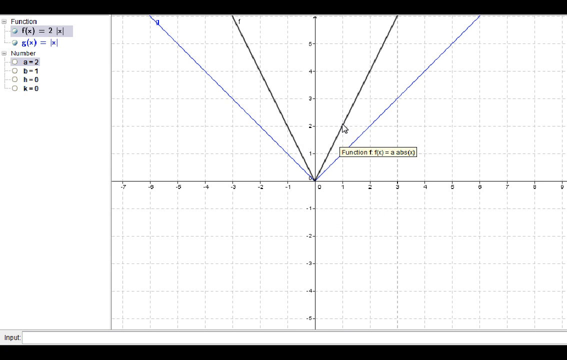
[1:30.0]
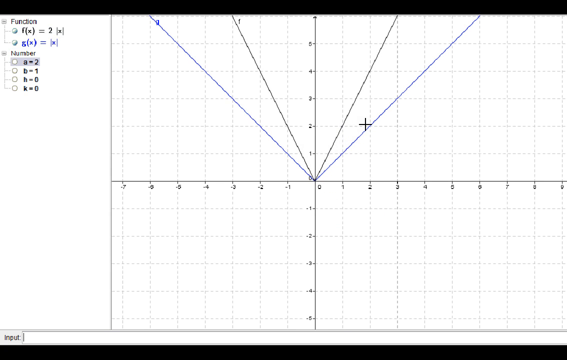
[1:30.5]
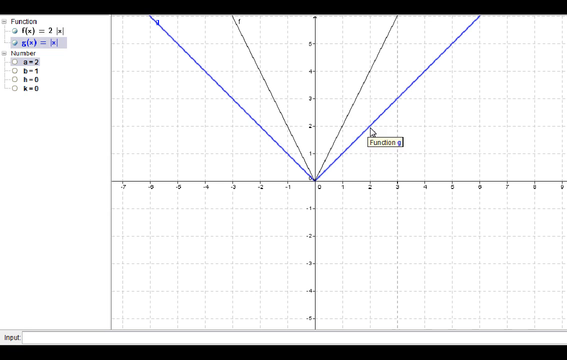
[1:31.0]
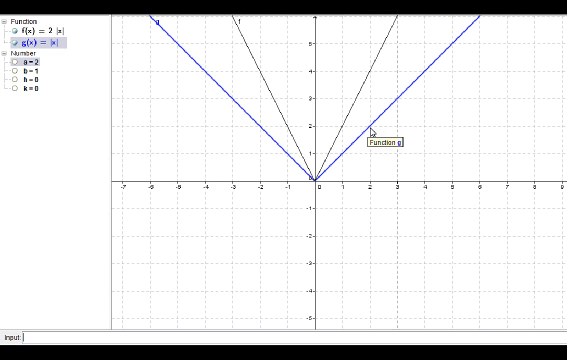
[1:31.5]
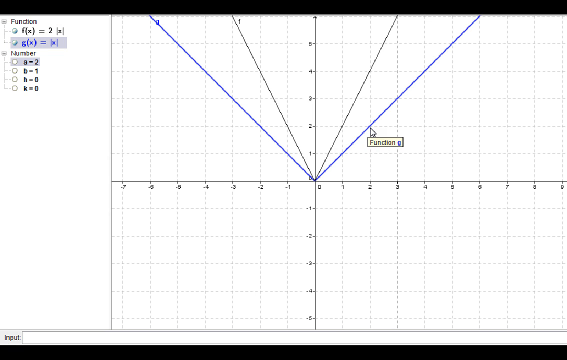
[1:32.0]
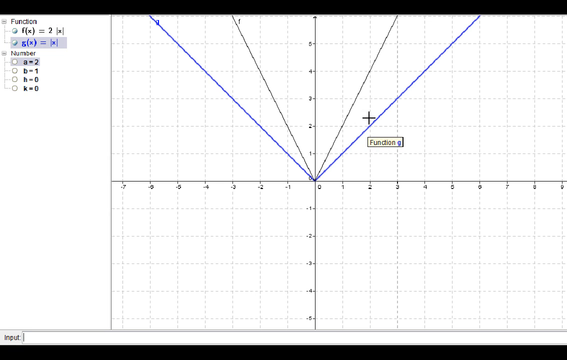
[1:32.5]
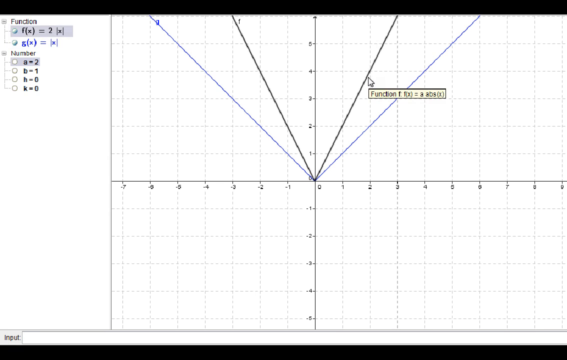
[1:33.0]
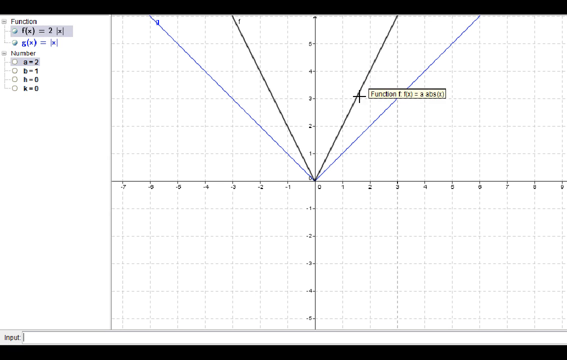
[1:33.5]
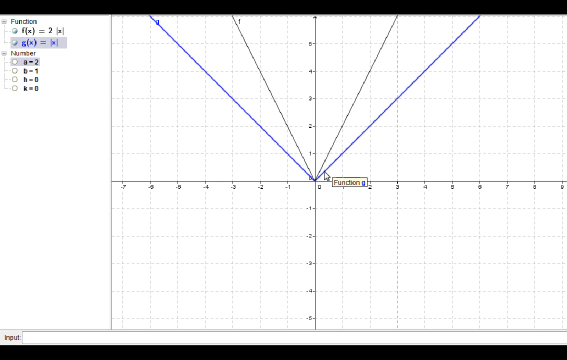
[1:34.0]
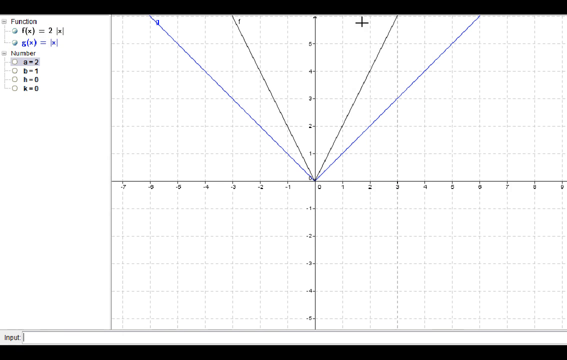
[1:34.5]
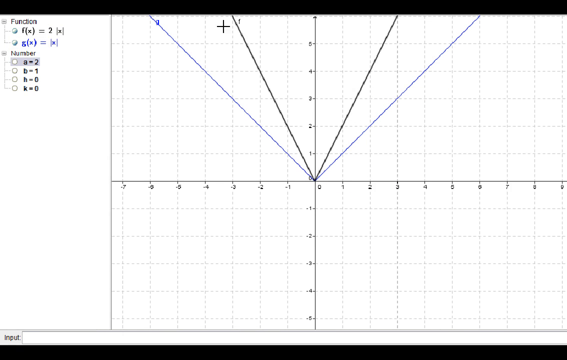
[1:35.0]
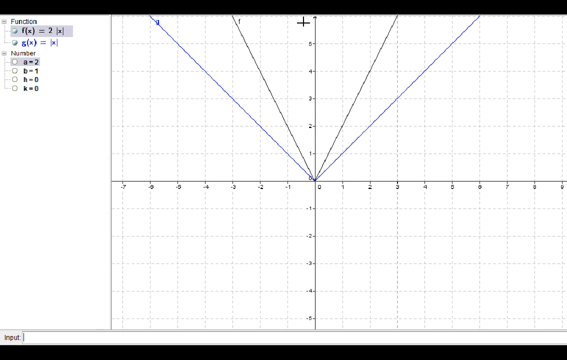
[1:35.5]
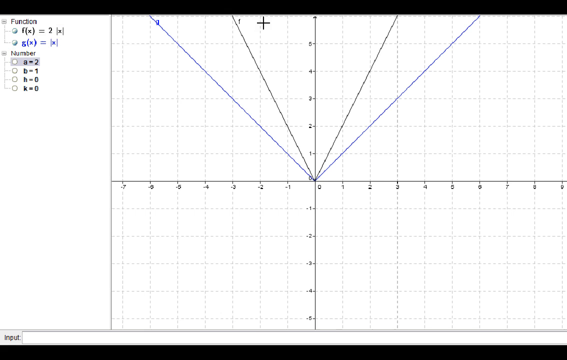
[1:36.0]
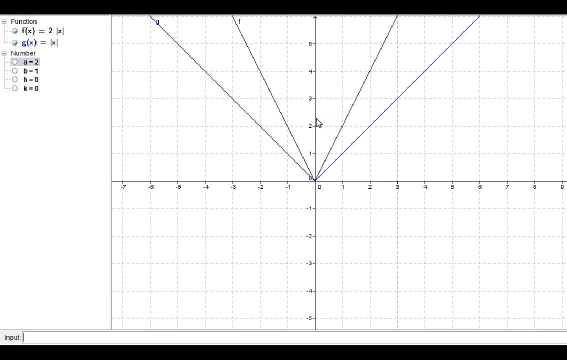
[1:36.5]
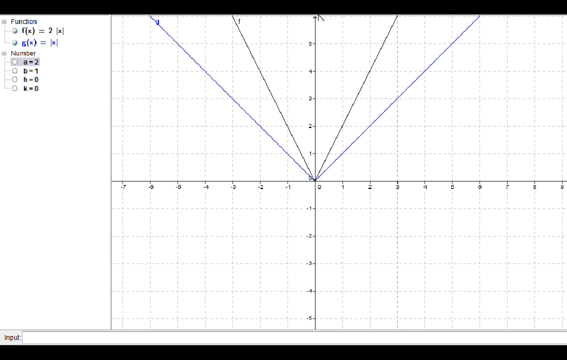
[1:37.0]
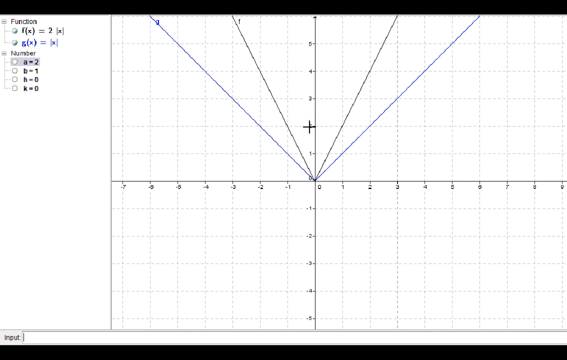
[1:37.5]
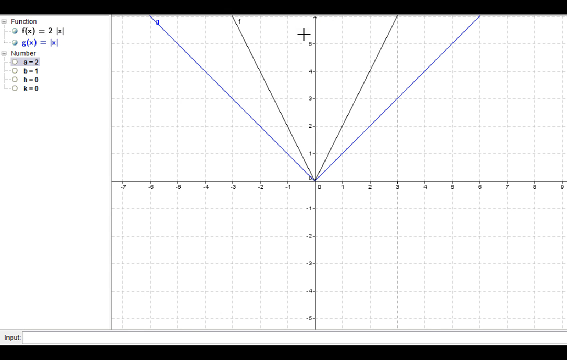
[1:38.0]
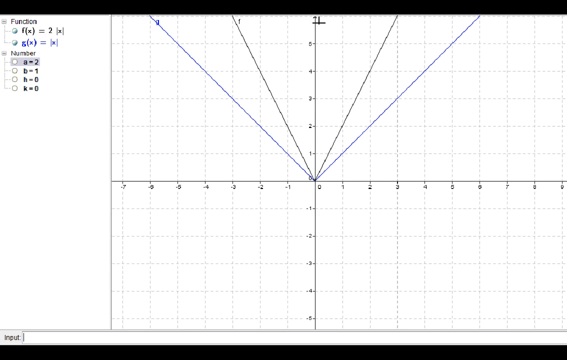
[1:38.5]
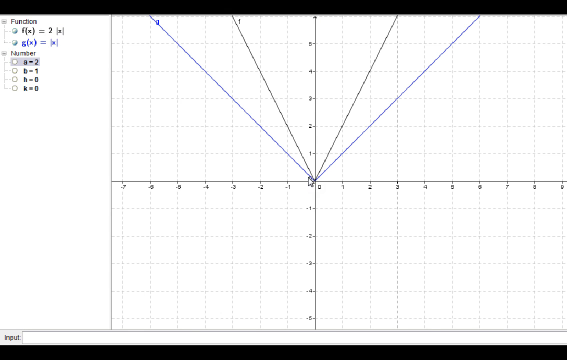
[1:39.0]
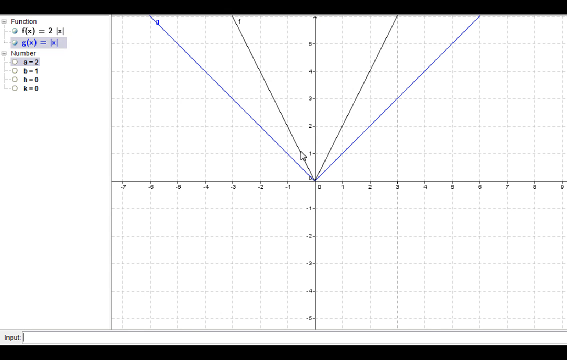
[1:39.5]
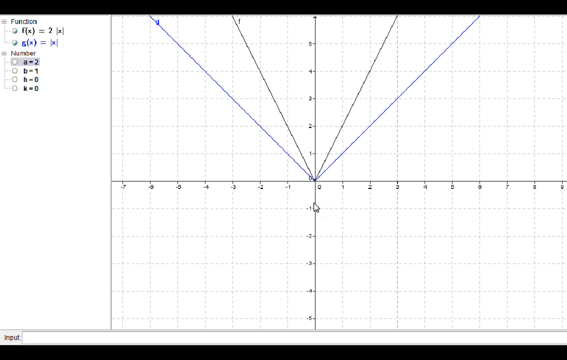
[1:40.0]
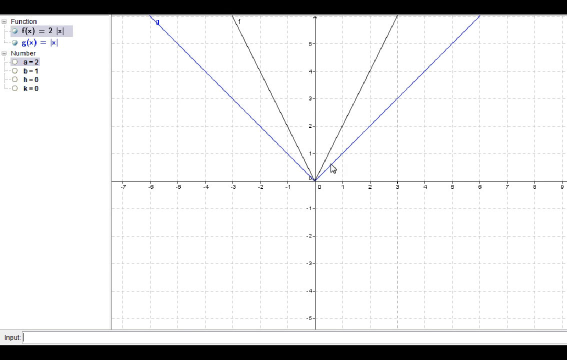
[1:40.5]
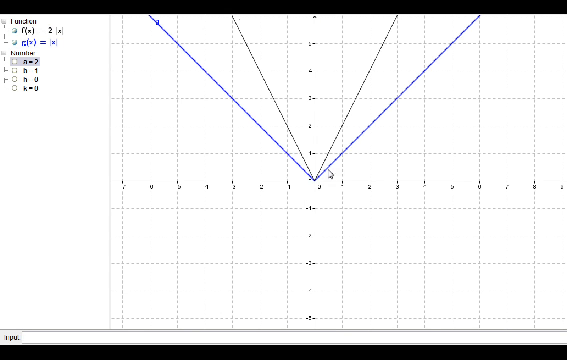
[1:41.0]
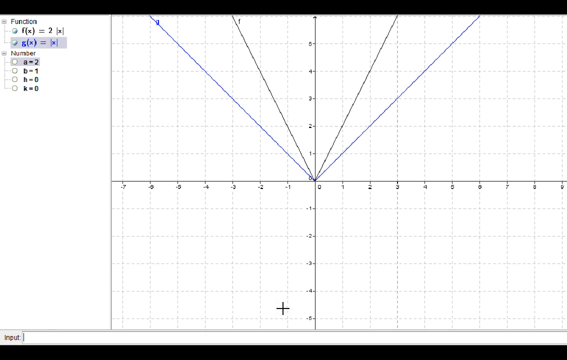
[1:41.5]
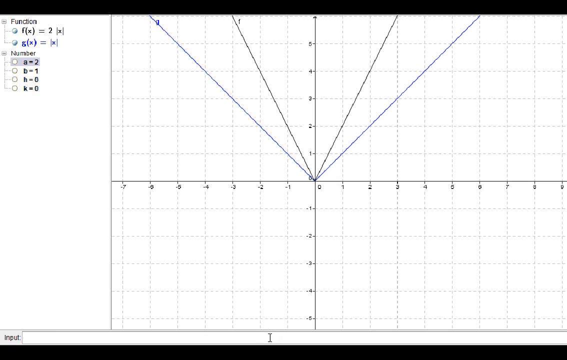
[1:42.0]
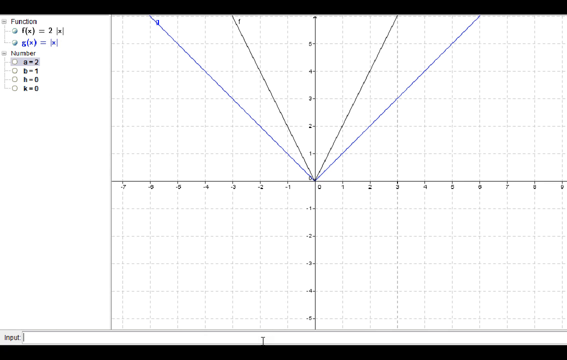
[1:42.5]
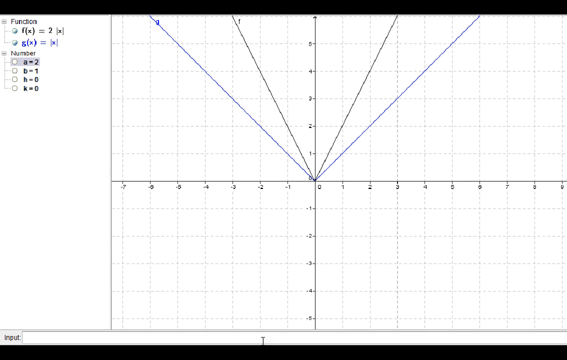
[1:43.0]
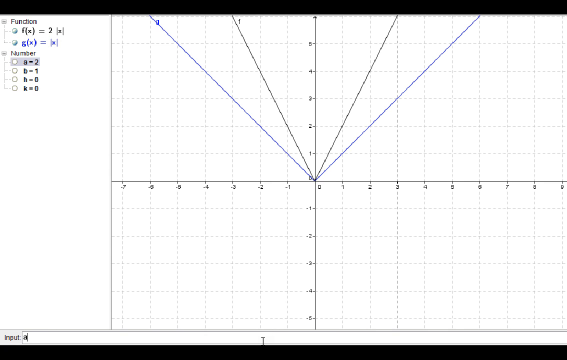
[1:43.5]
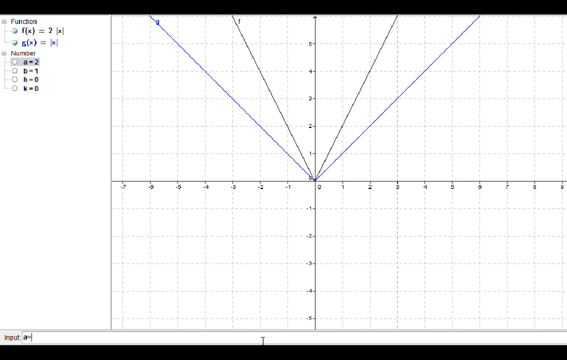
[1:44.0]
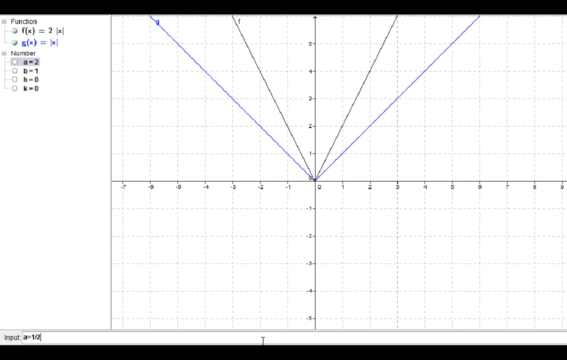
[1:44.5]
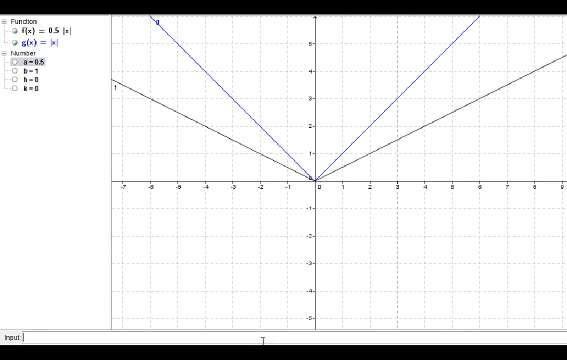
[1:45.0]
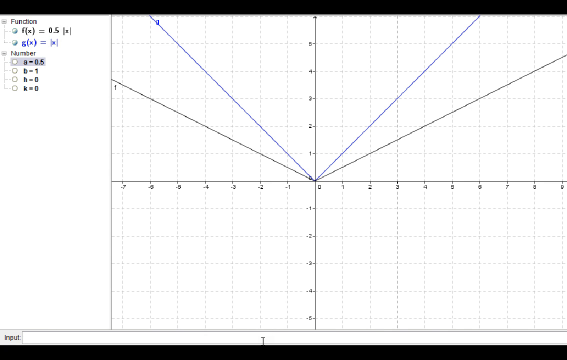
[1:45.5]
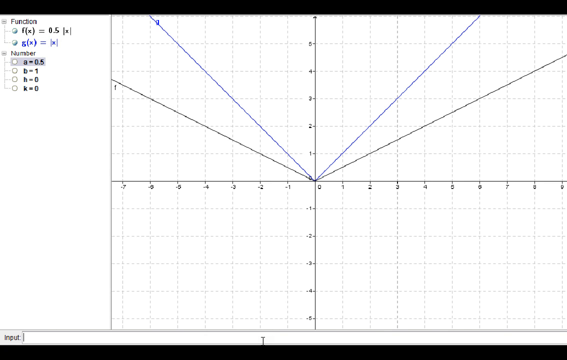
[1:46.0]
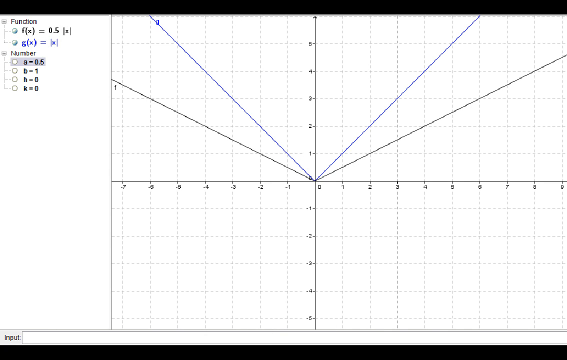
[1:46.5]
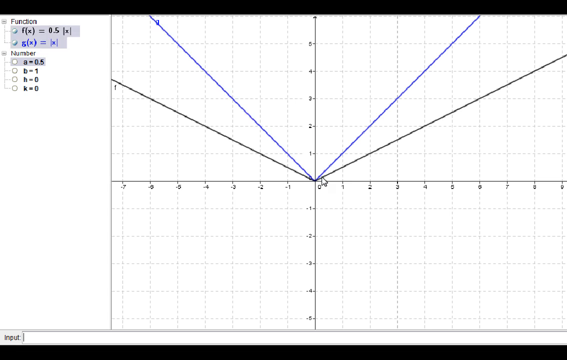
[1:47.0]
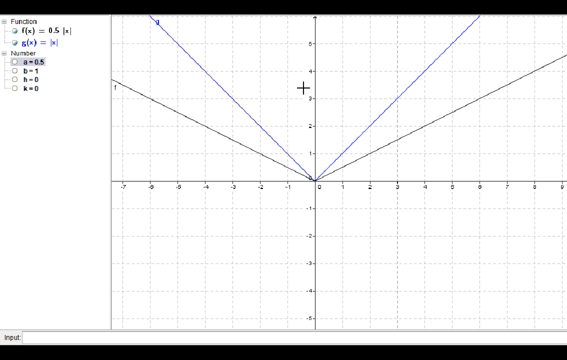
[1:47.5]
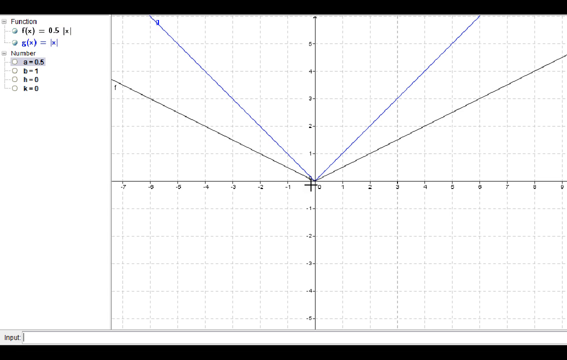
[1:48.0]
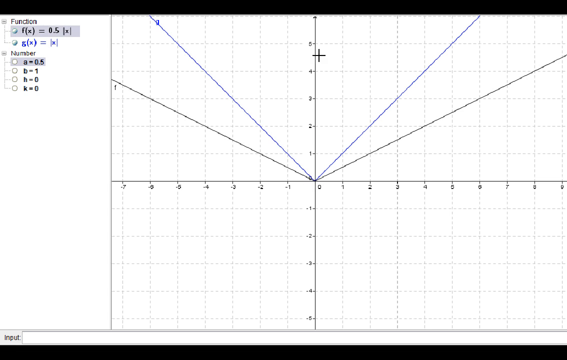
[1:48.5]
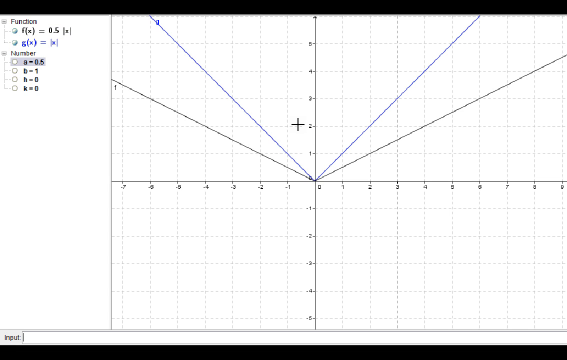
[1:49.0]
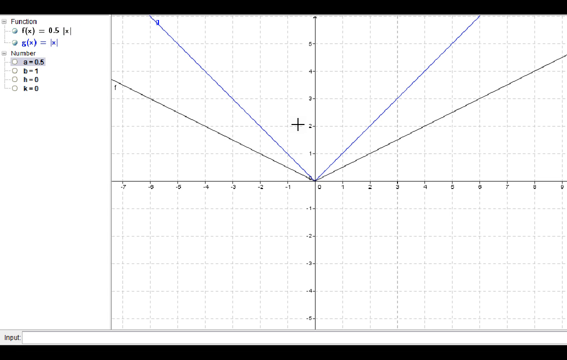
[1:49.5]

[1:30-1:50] Black and blue function lines, f(x) = 2 and g(x) = the absolute value of x, are shown on the 2D axis/grid. The person moves down to the numbers section on the left-hand side and changes some of the values, and the function lines change accordingly. There are no screen transitions, and no humans or animals appear; the 2D graph with negative and positive numbers and several linear functions stays on screen.